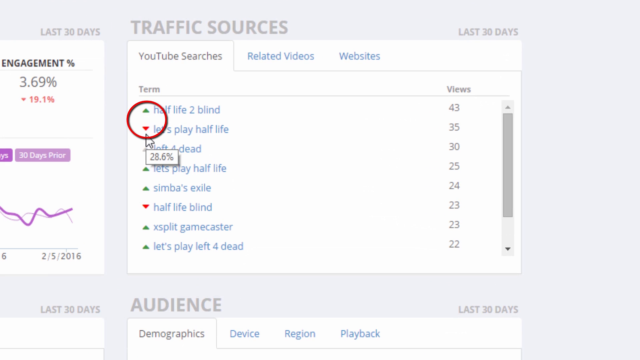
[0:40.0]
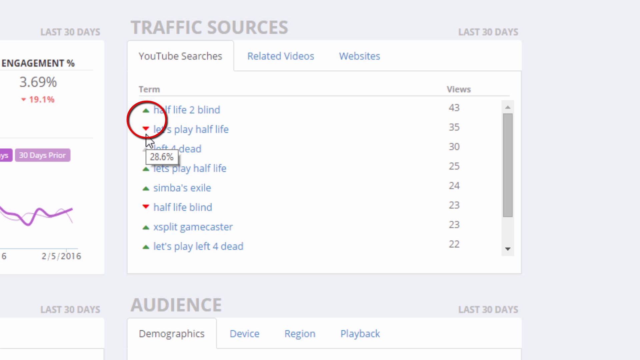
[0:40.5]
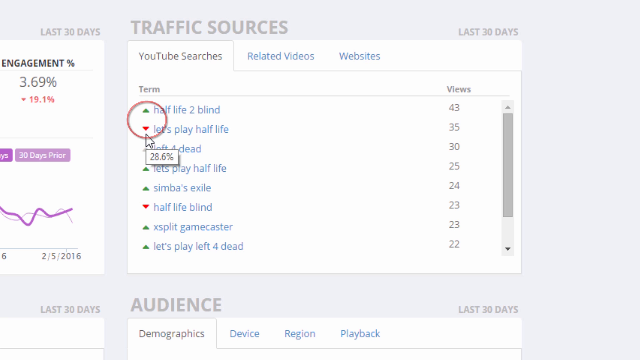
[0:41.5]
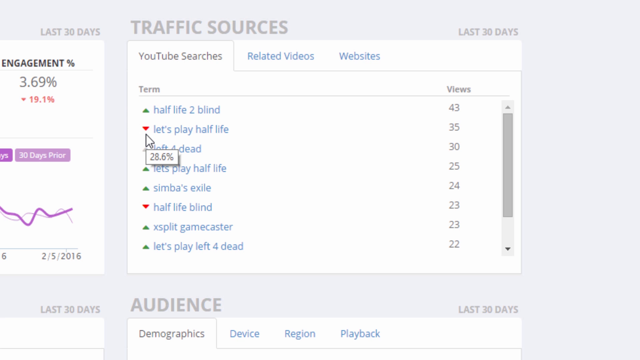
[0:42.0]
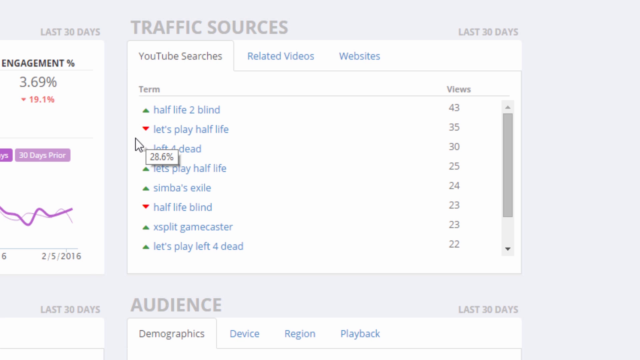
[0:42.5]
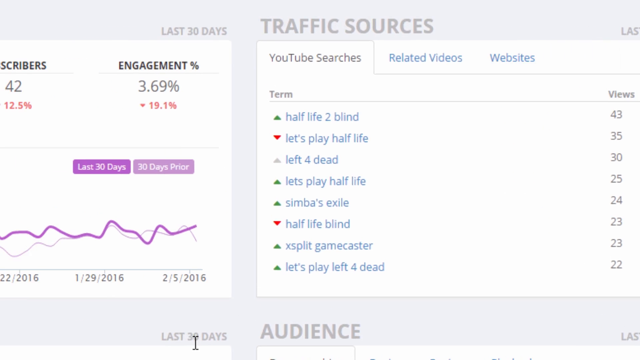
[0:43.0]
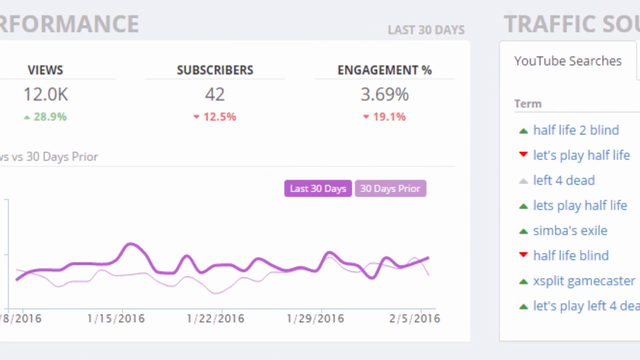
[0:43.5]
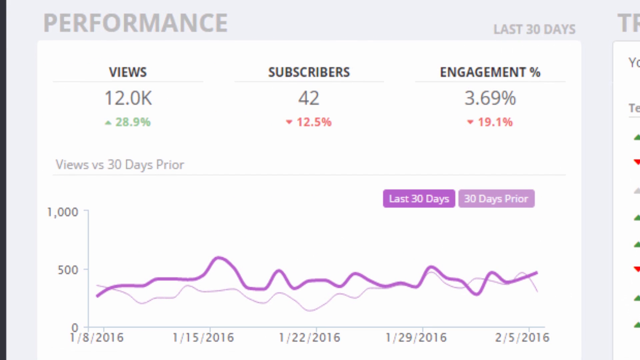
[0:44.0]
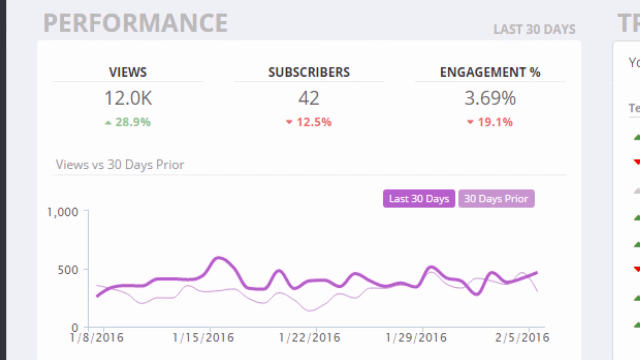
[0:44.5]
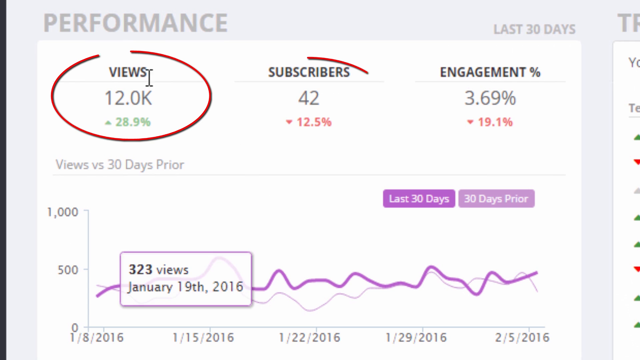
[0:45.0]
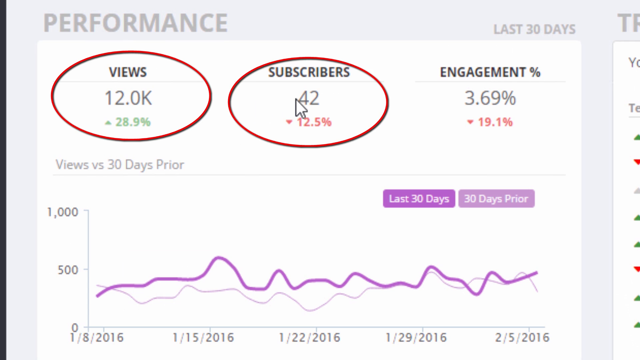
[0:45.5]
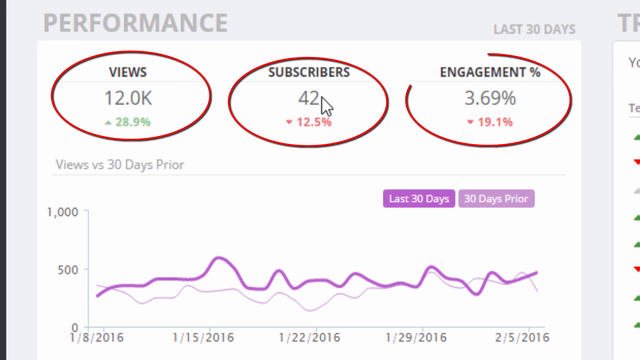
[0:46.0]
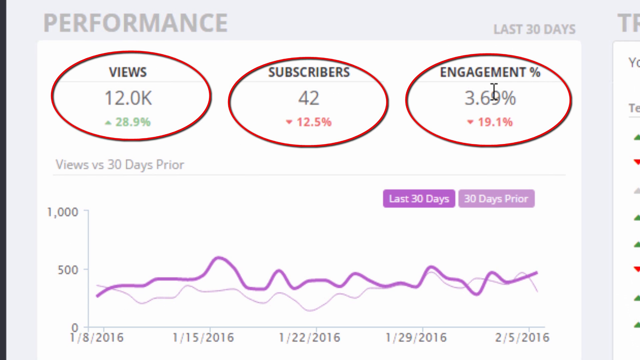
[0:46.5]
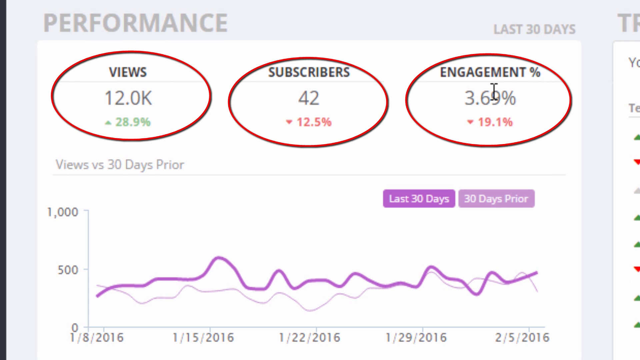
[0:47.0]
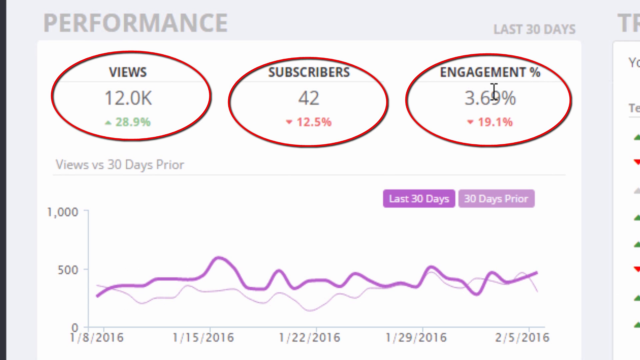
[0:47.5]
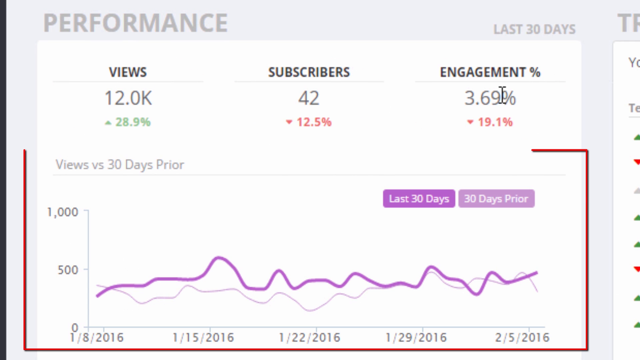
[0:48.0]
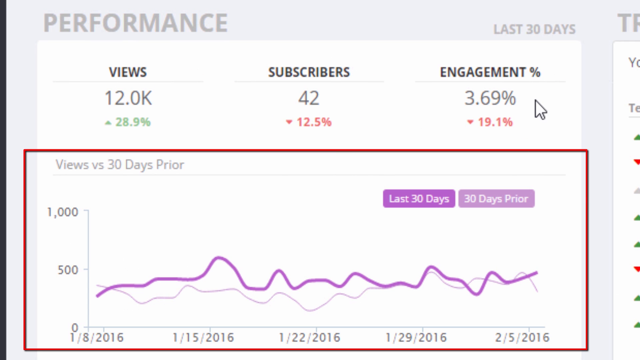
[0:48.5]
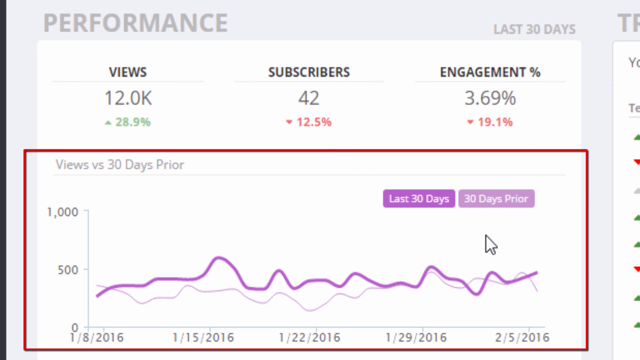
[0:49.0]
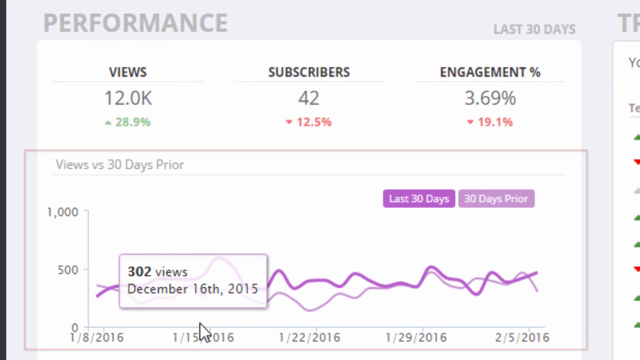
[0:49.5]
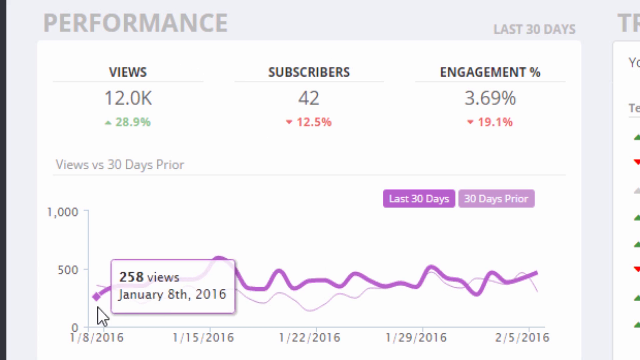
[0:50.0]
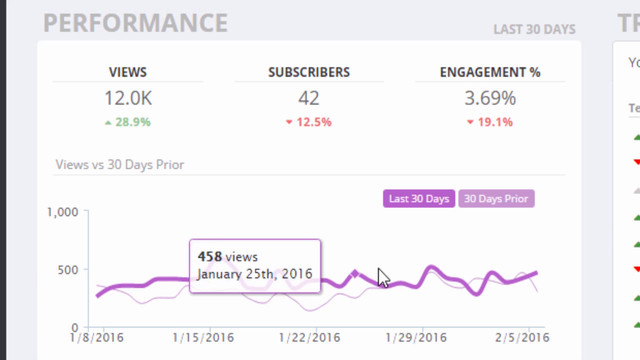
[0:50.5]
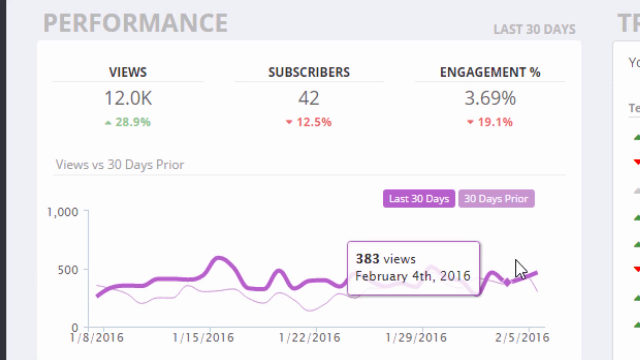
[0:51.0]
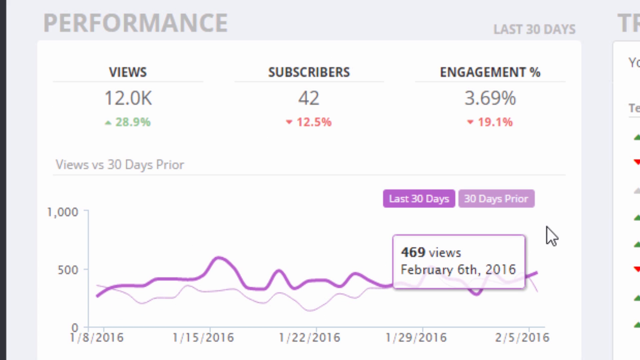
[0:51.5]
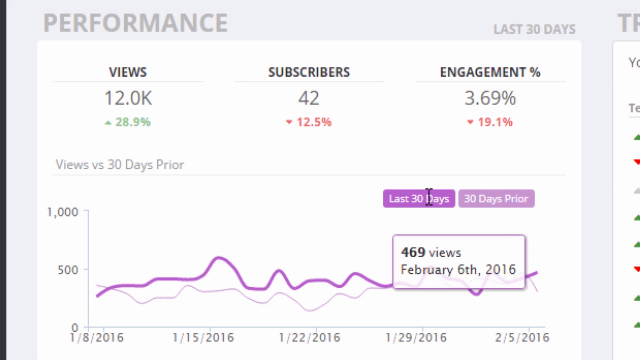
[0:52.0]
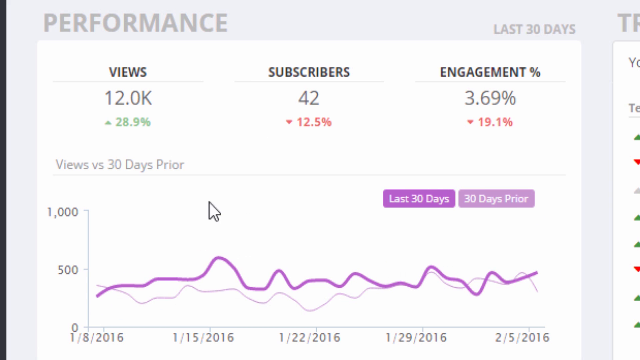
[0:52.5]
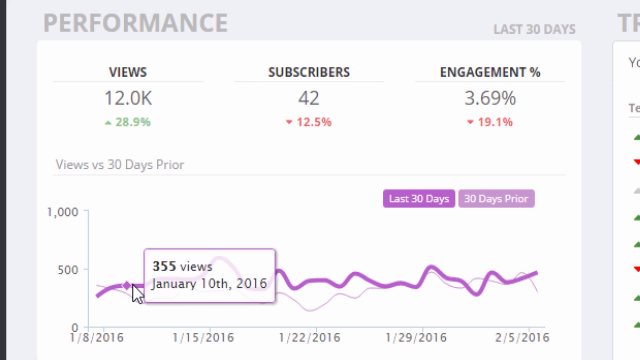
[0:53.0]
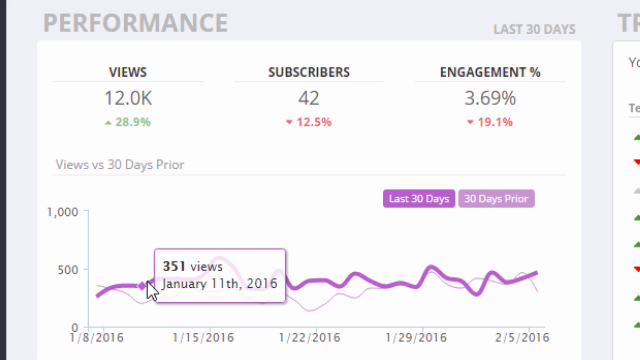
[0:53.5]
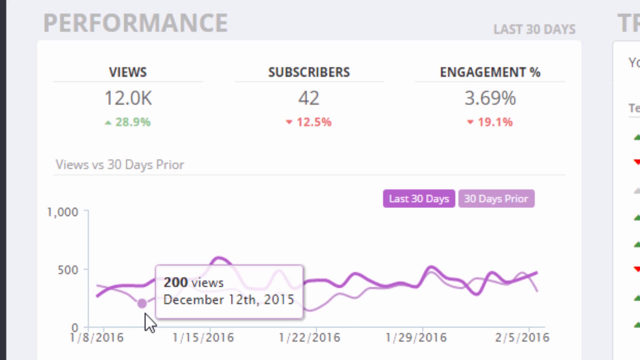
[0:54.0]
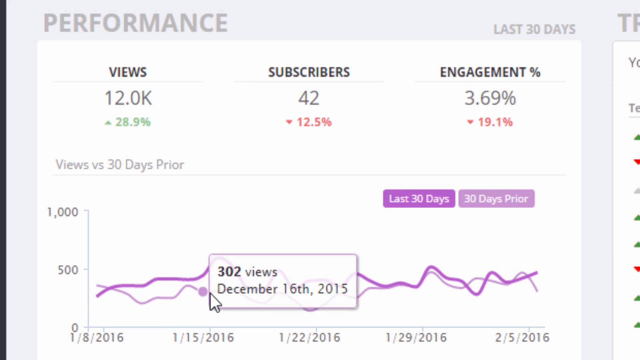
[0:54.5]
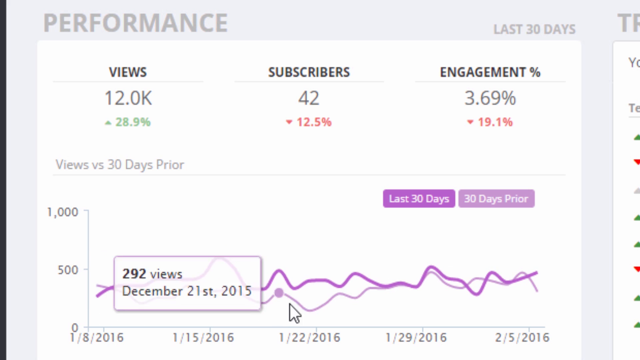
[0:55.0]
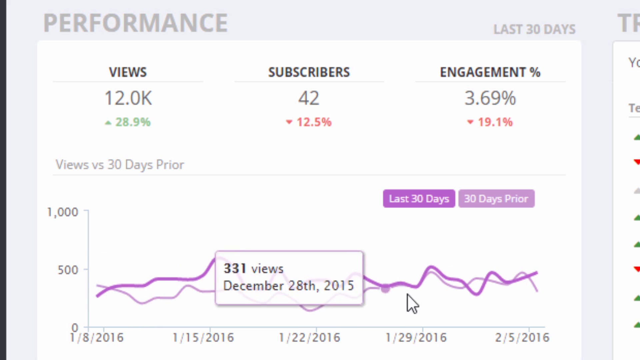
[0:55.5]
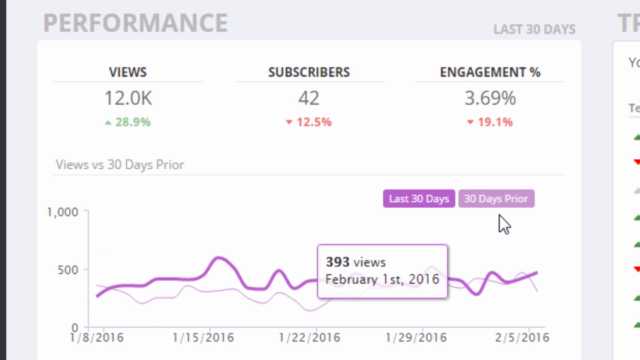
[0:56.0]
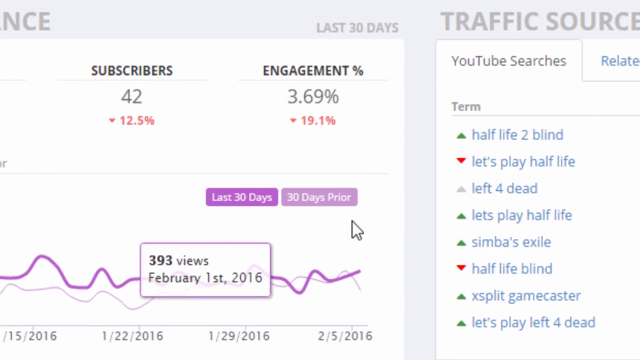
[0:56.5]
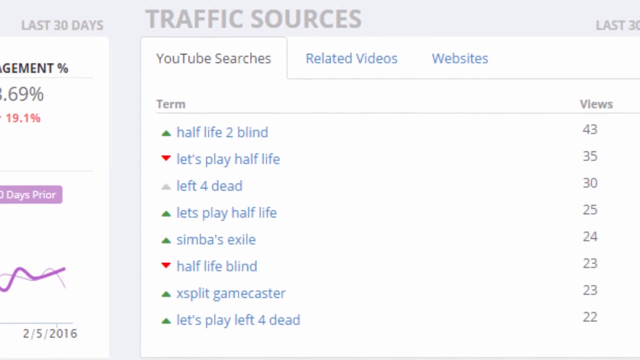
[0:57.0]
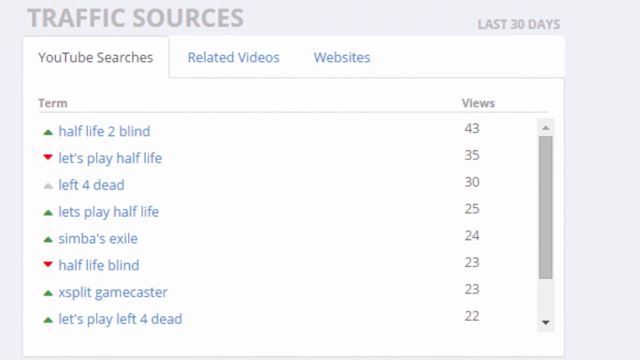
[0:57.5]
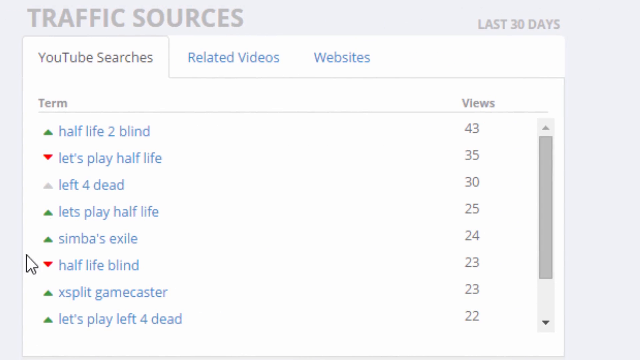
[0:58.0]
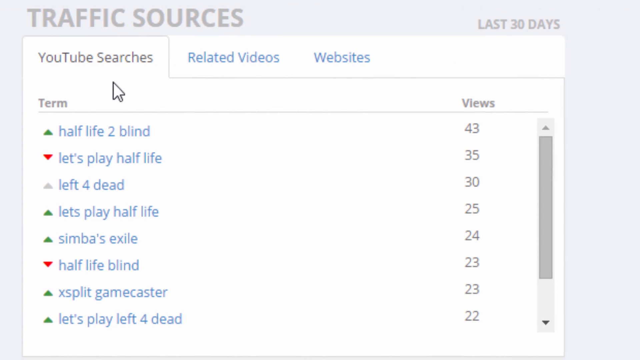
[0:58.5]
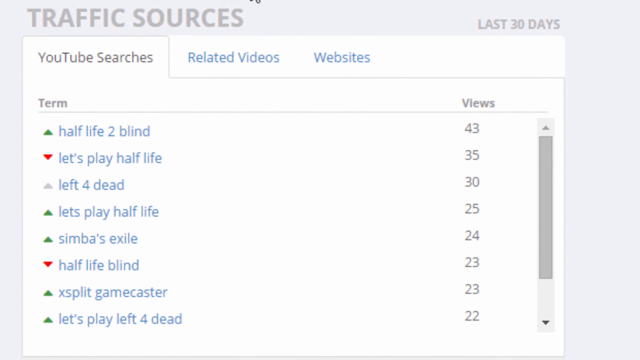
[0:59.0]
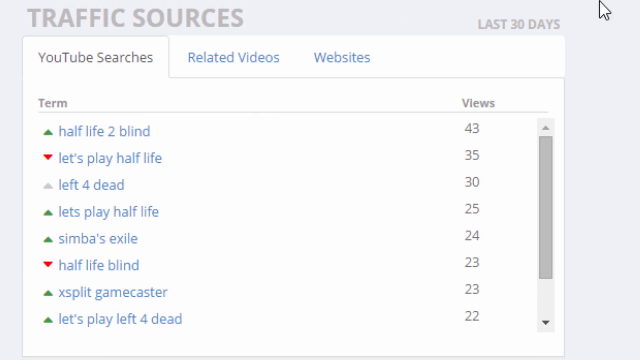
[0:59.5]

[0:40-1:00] The traffic sources section of the YouTube channel is in focus, with "YouTube searches", "related videos" and "websites". Under YouTube searches are columns for term and views, listing search terms beginning "half-life 2 blind let's play", with the views to the right of each: 43, 35, 30, 25, 24, 23, 23 and 22. Two of them are circled. The camera then pans left to performance, where views, subscribers and engagement are circled, and below them is a graph of views over the prior 30 days; the graph is squiggly, going up and down. The camera pans back to traffic sources, which lists only the last 30 days. Below that is the audience section.